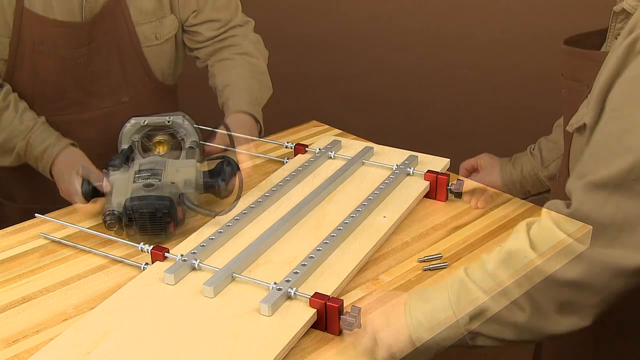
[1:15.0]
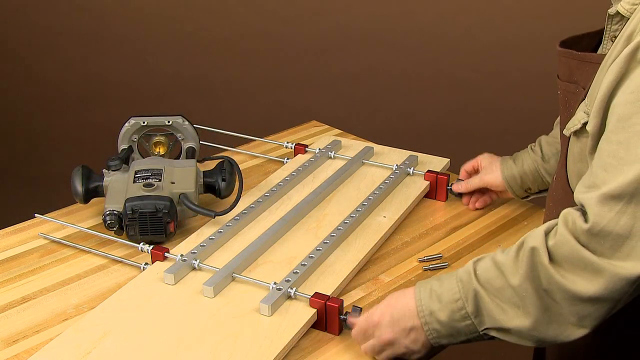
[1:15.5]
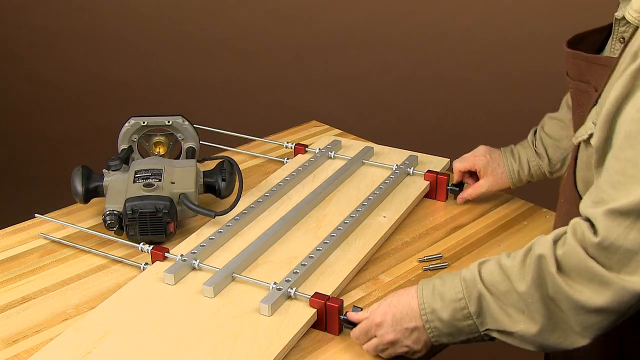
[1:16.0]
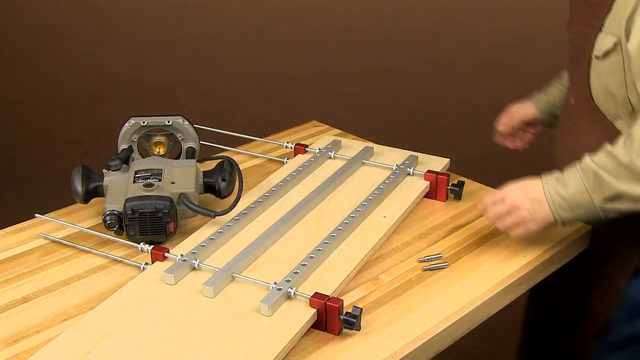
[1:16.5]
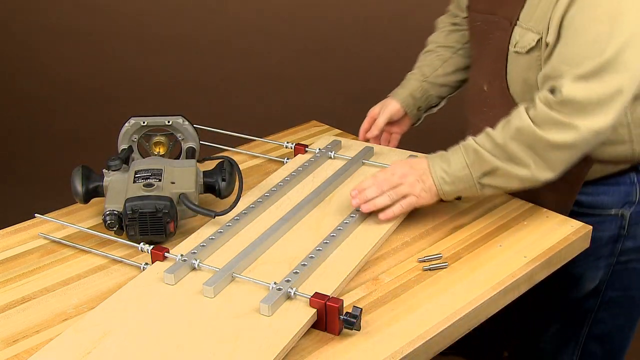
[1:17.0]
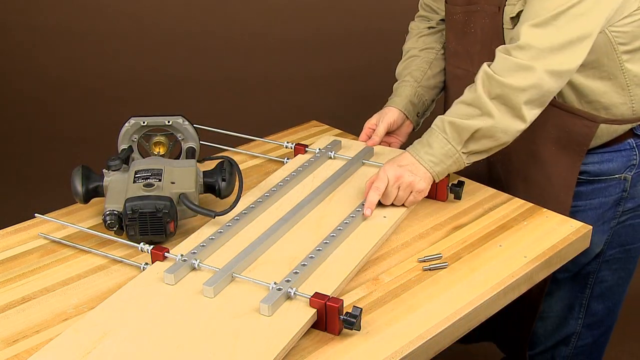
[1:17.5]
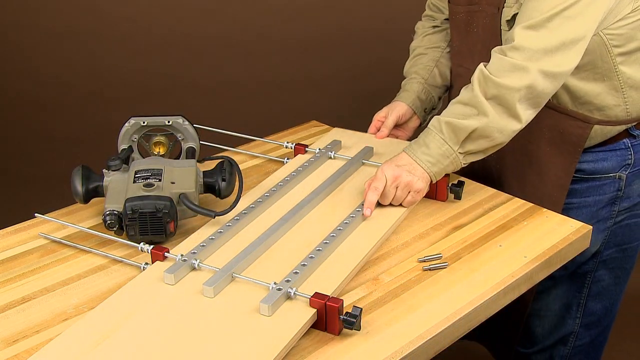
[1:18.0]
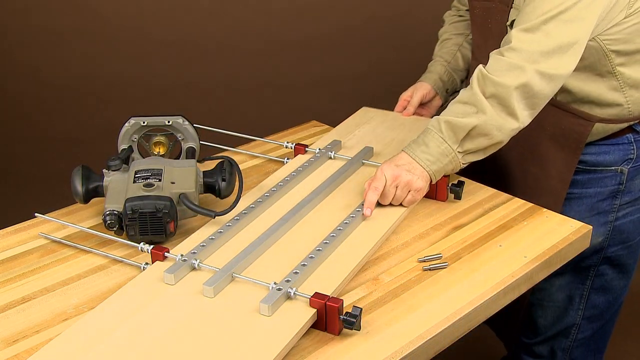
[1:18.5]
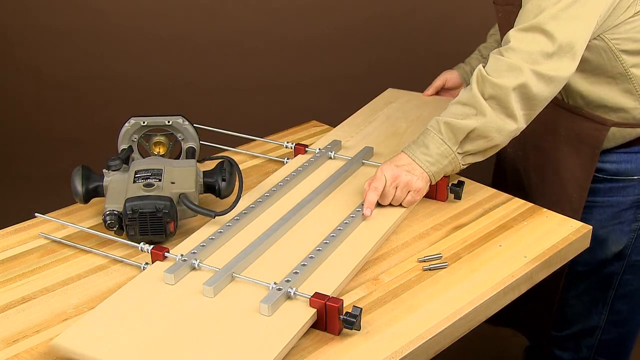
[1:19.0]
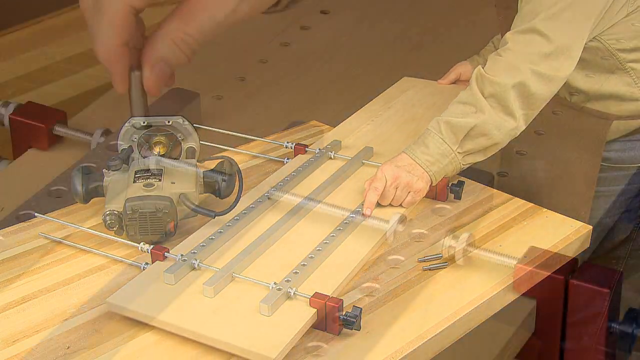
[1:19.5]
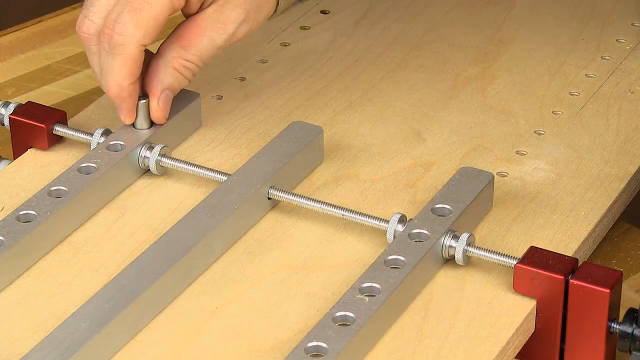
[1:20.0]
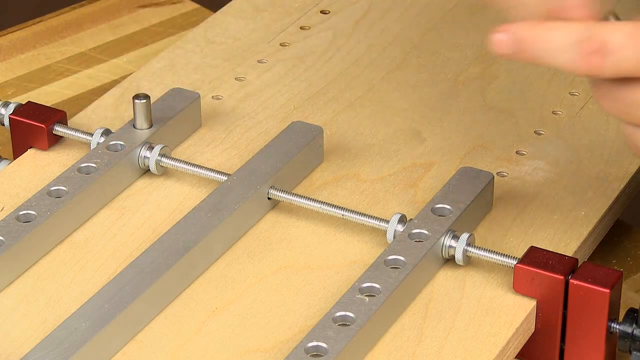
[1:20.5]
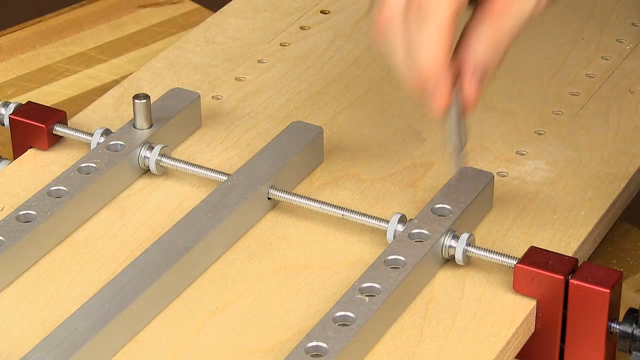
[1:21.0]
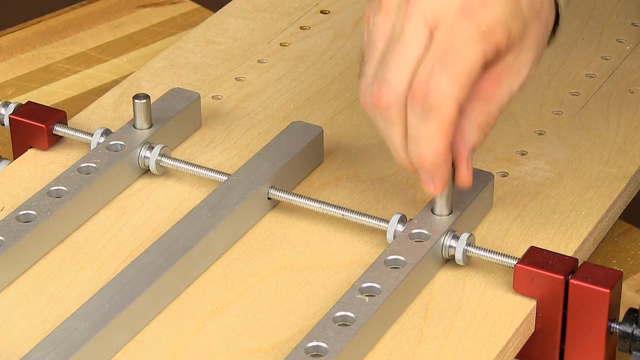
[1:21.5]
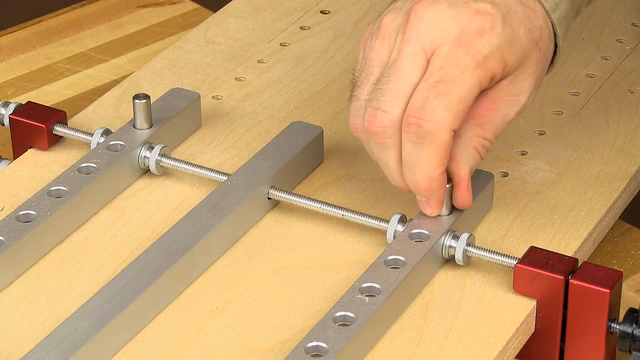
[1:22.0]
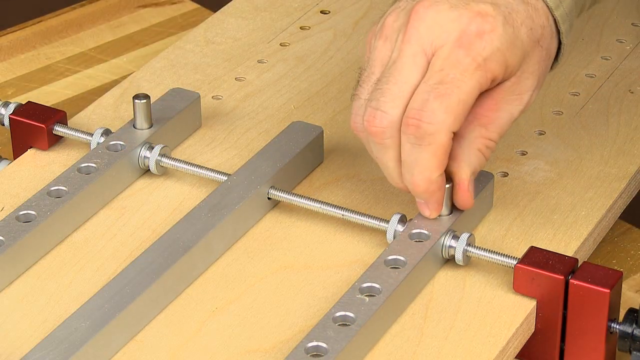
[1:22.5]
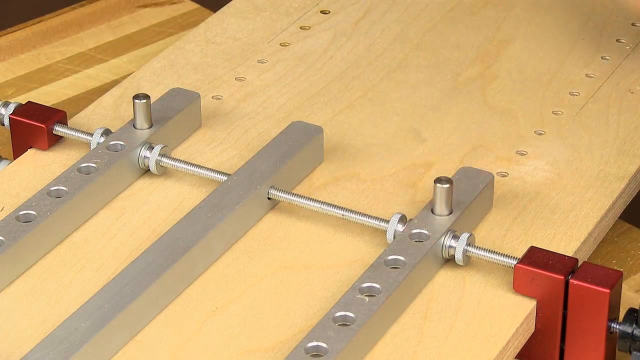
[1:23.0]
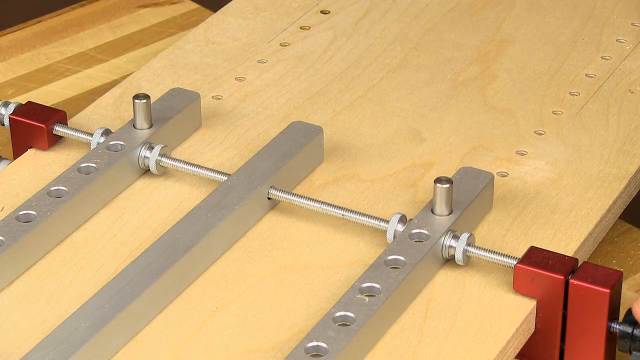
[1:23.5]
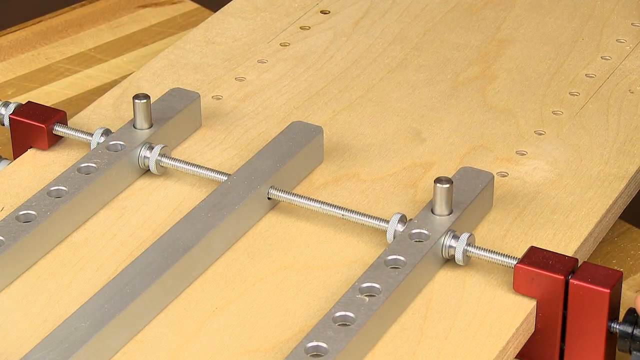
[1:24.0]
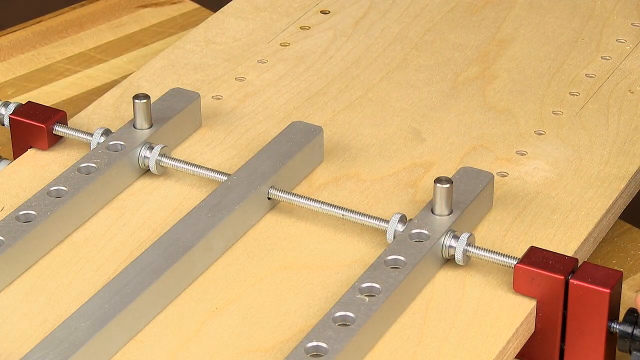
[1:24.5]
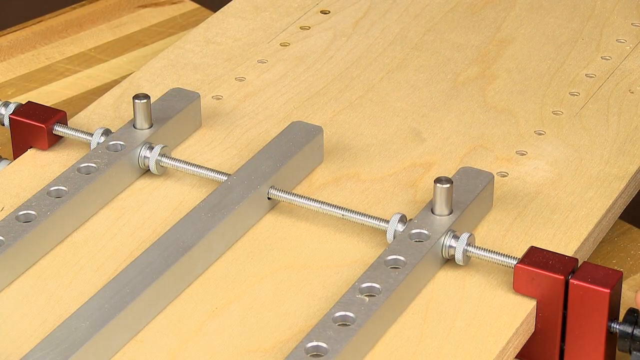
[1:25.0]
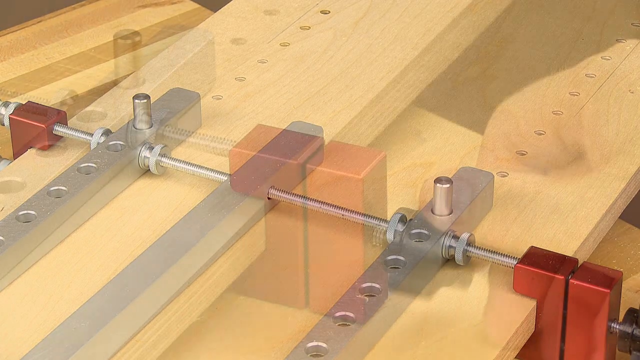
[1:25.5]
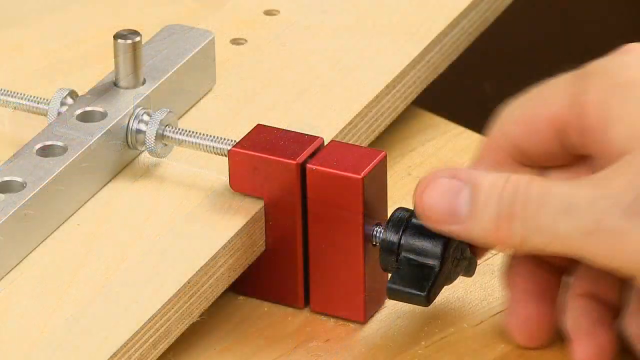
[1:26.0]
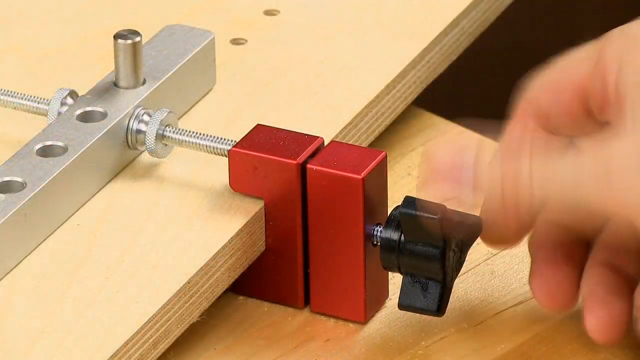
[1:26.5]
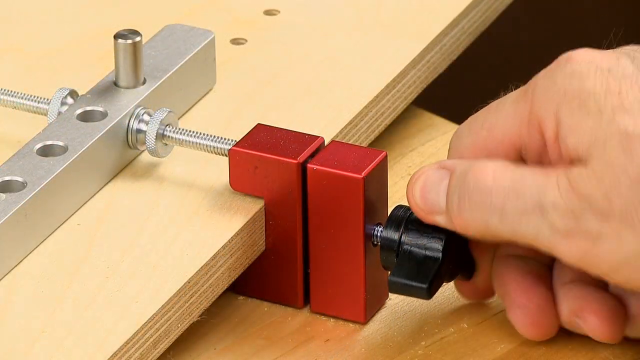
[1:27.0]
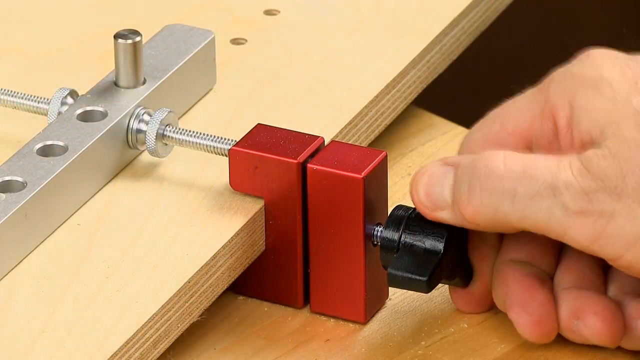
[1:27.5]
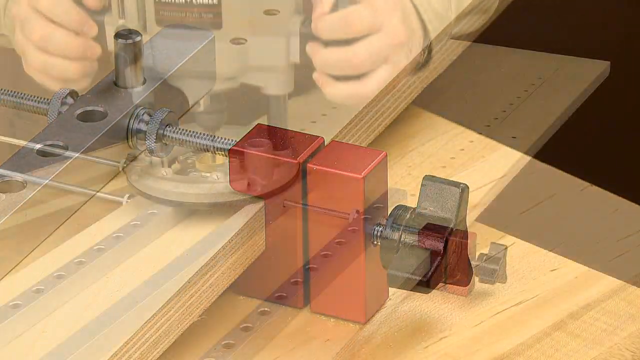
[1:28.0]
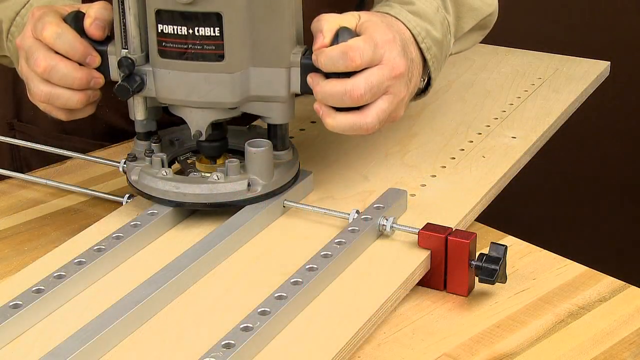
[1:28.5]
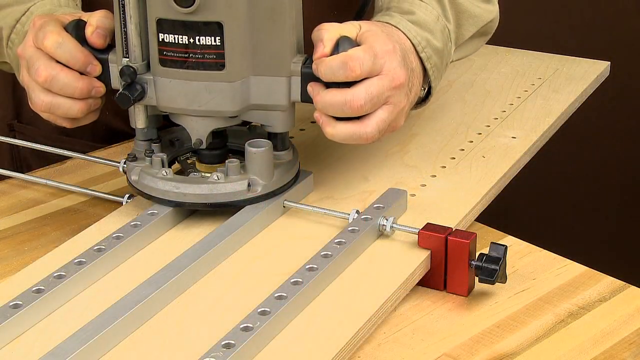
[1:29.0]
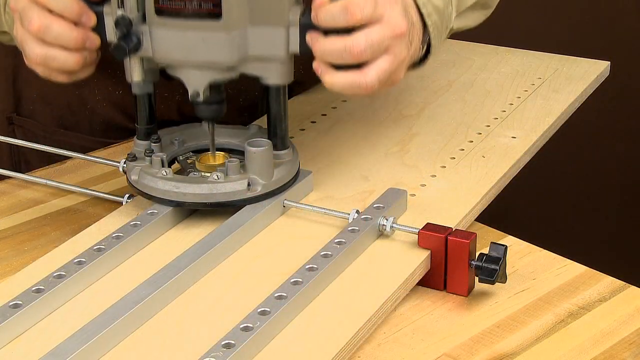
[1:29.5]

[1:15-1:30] The piece of plywood with the jig is on the table. The man loosens the wood from the jig, pulls it through, tightens it up again, and continues drilling holes along the length of the wood. After pulling it through, he has two pieces of metal that go through the jig into the holes to hold it in place; it looks very stable and simple to use, and it stays completely in line. The man wears blue jeans, a brown apron and a long-sleeved green shirt; mostly only his hands are visible, sometimes his body, but never his face. The background is a brown wall. The holes already drilled look very symmetrical.